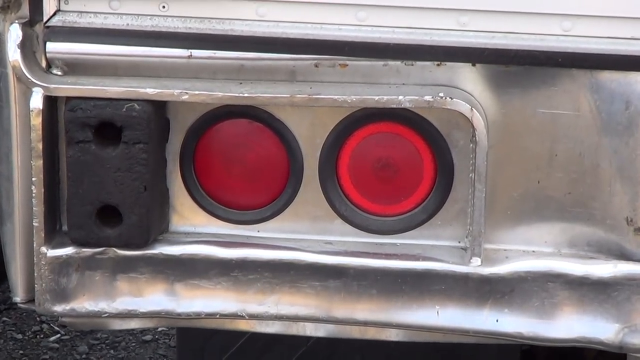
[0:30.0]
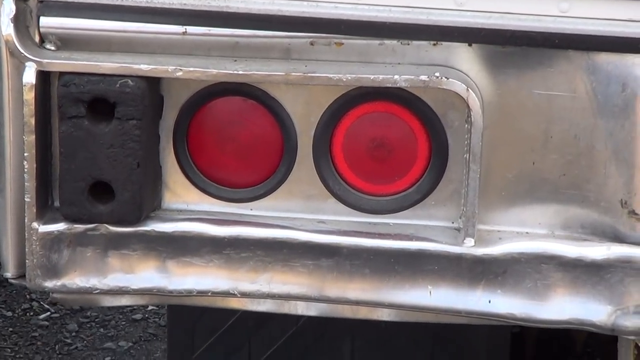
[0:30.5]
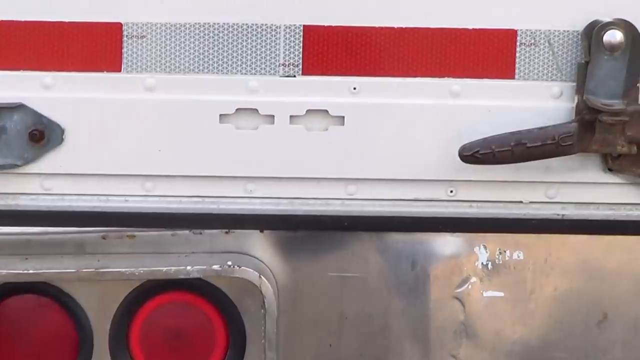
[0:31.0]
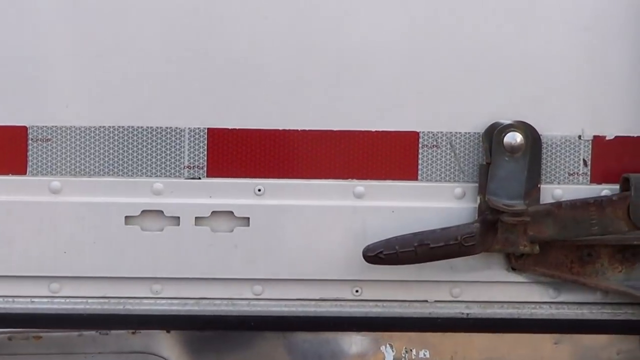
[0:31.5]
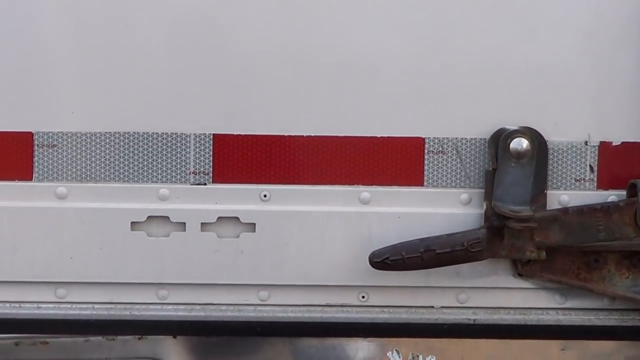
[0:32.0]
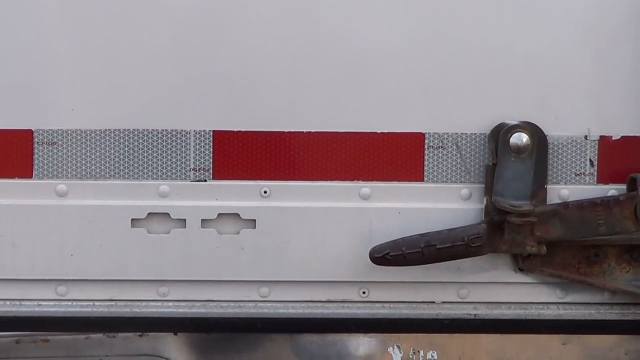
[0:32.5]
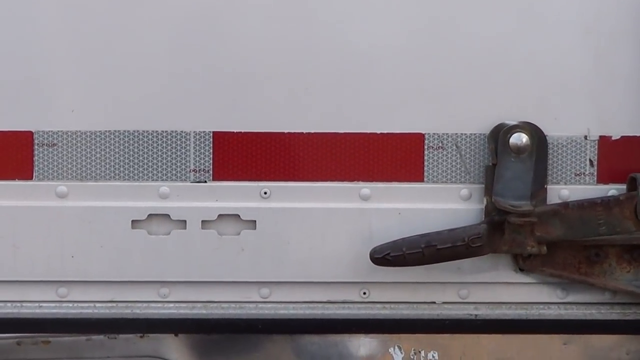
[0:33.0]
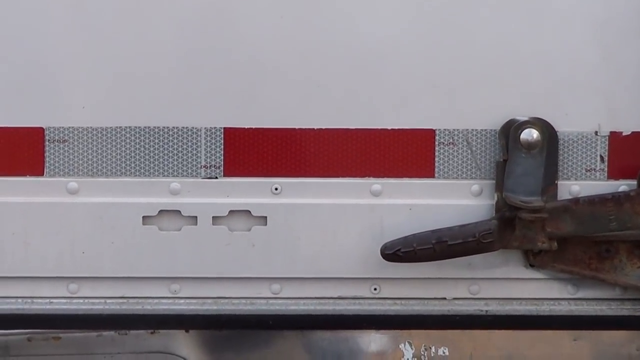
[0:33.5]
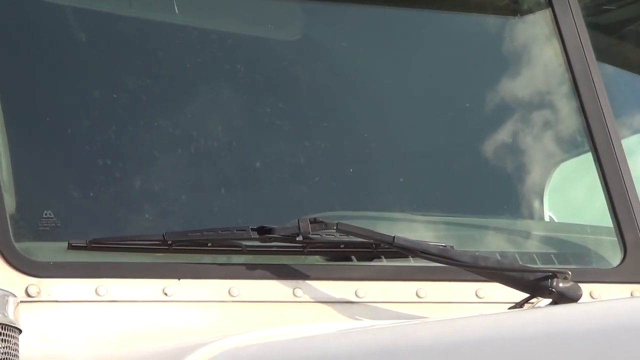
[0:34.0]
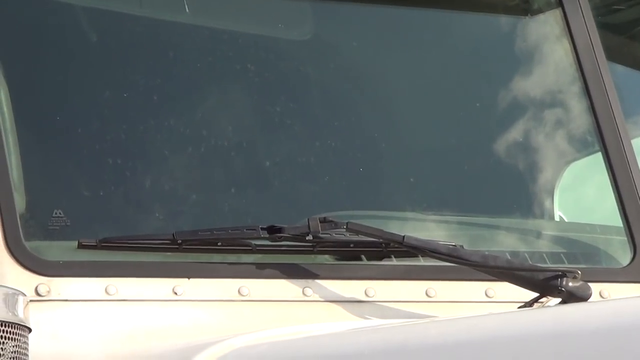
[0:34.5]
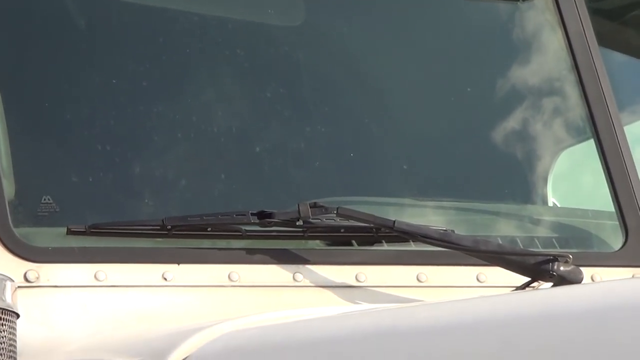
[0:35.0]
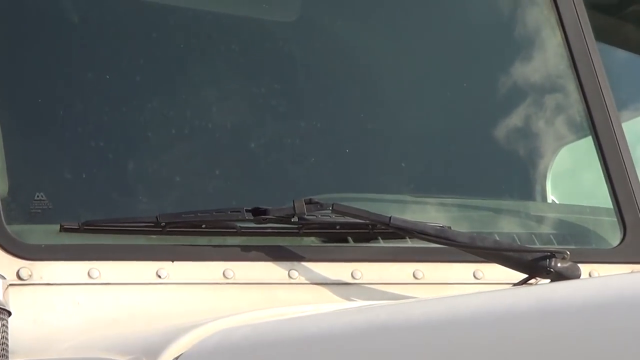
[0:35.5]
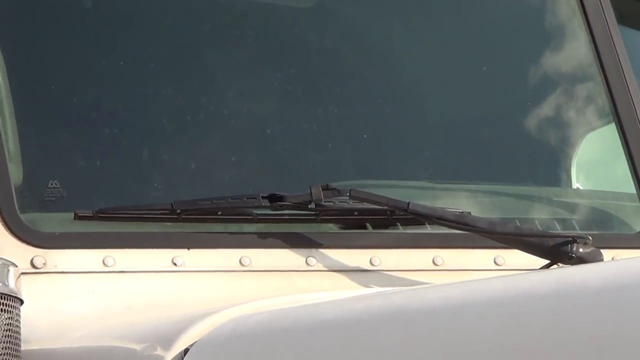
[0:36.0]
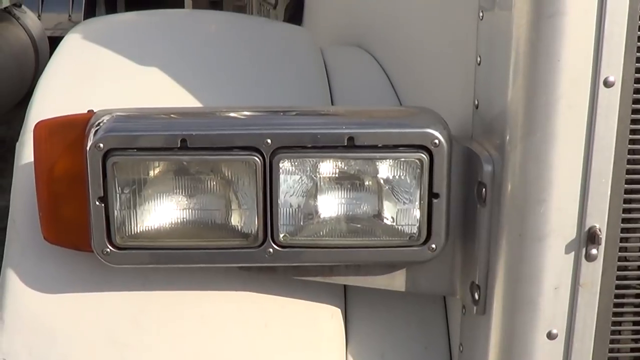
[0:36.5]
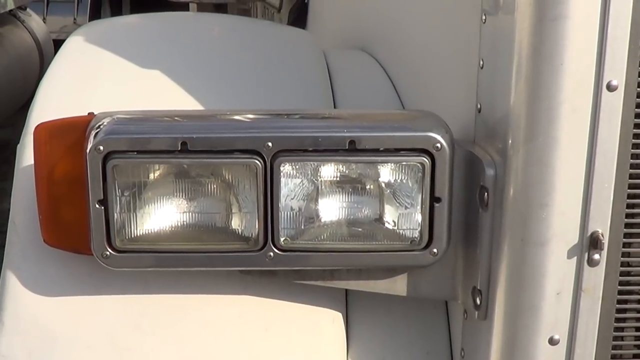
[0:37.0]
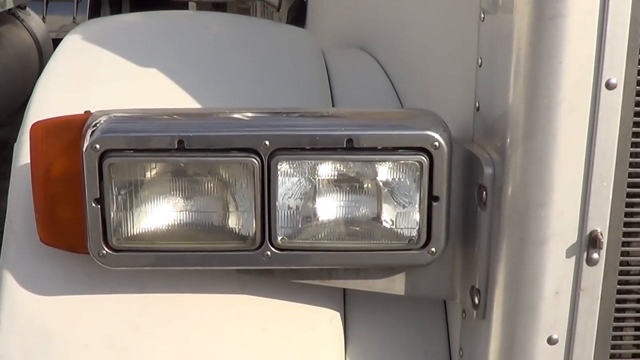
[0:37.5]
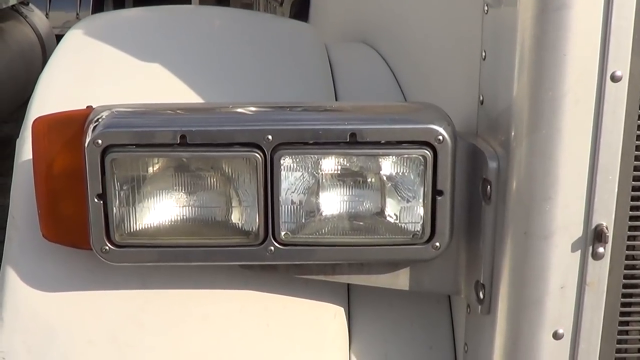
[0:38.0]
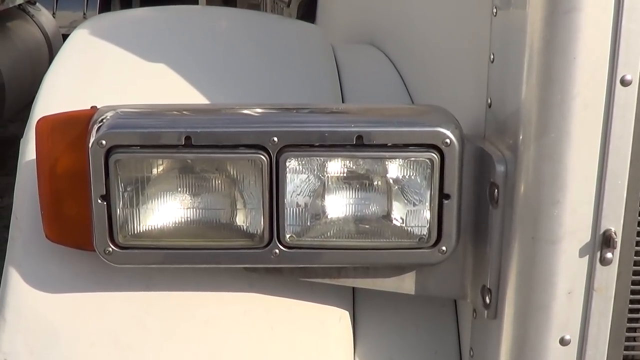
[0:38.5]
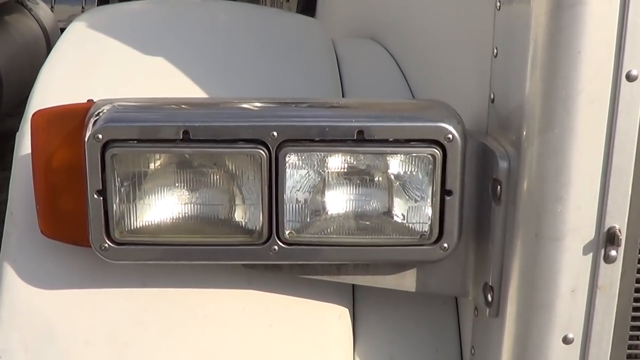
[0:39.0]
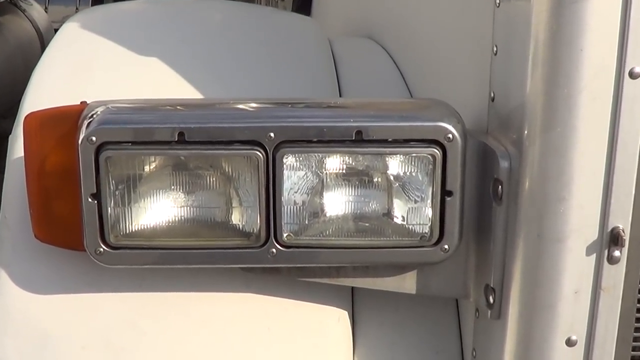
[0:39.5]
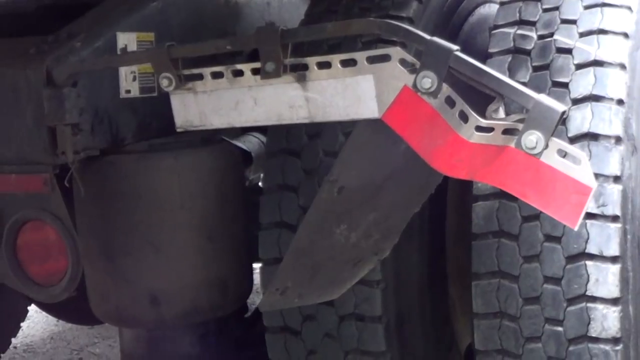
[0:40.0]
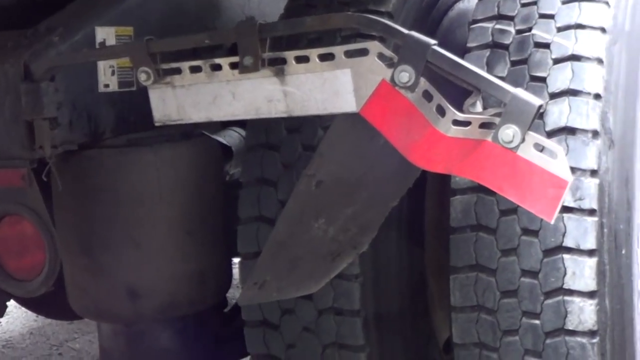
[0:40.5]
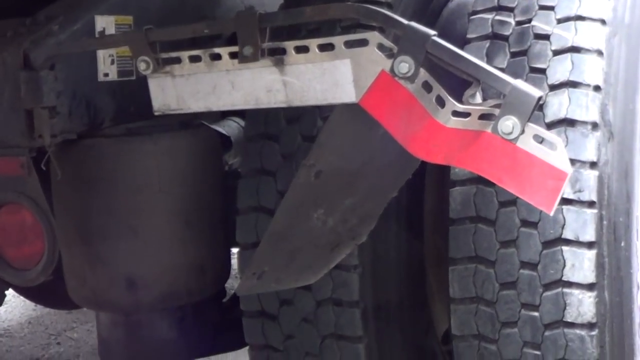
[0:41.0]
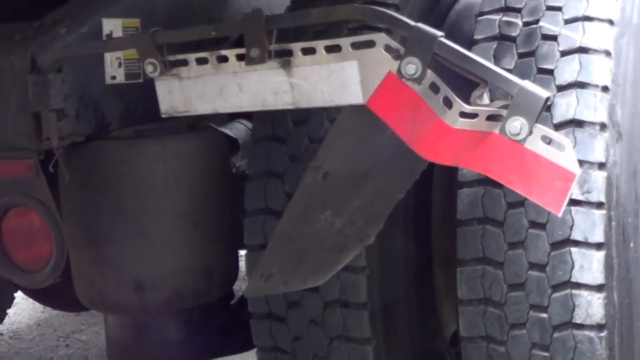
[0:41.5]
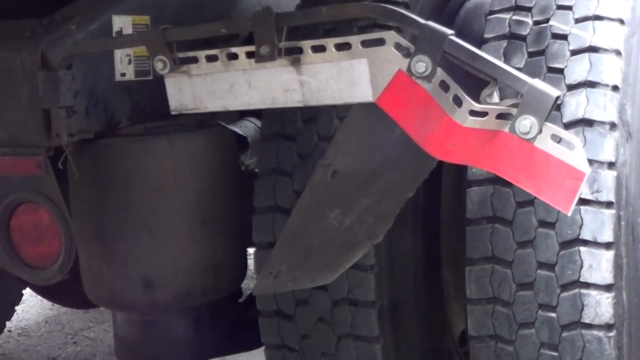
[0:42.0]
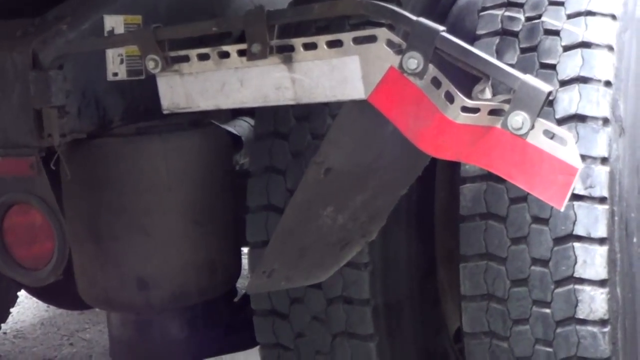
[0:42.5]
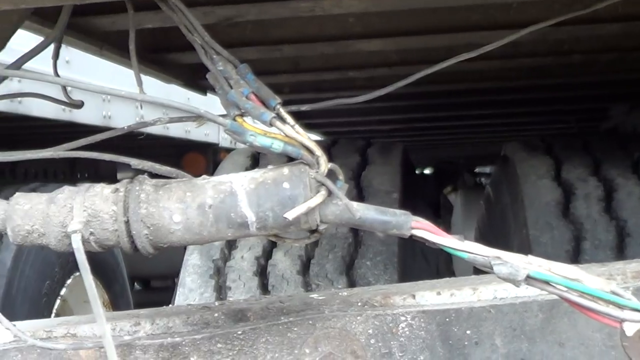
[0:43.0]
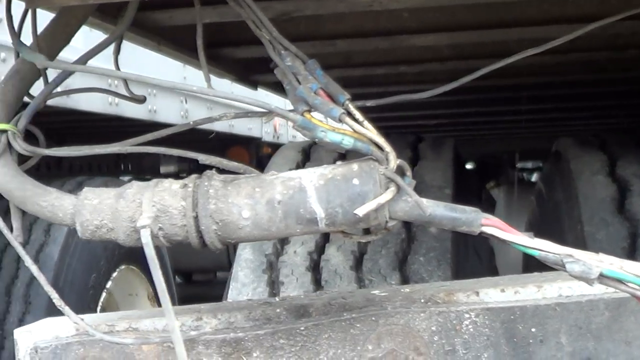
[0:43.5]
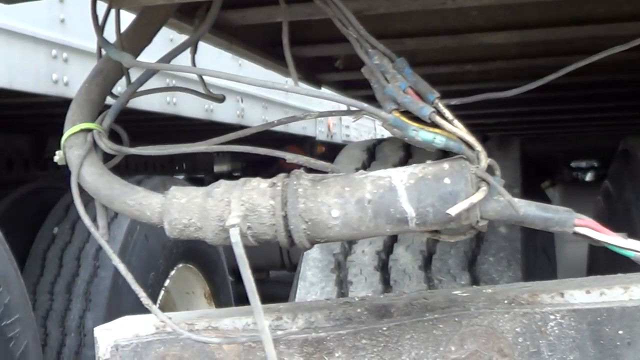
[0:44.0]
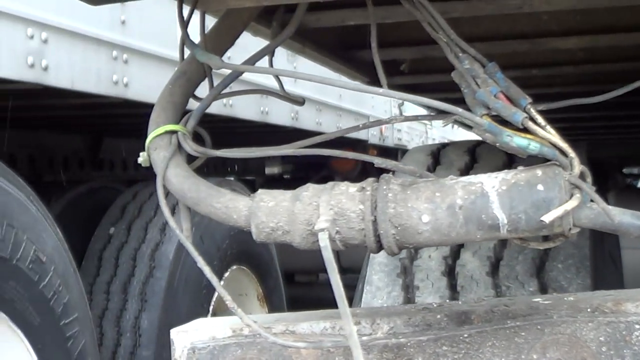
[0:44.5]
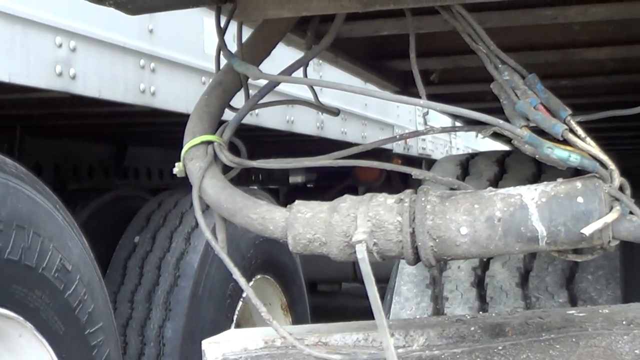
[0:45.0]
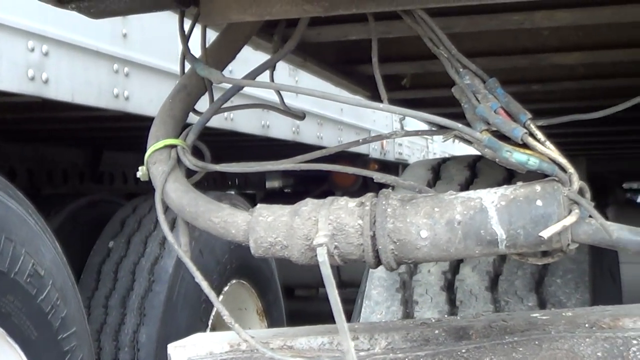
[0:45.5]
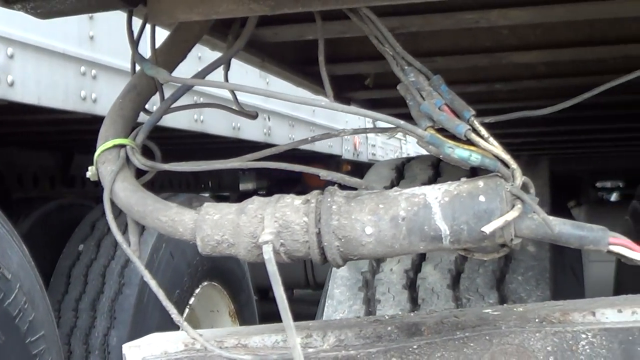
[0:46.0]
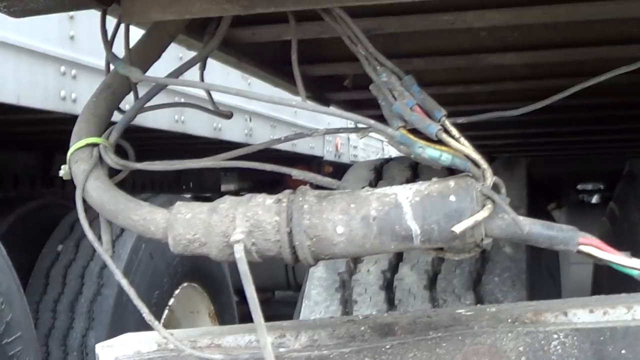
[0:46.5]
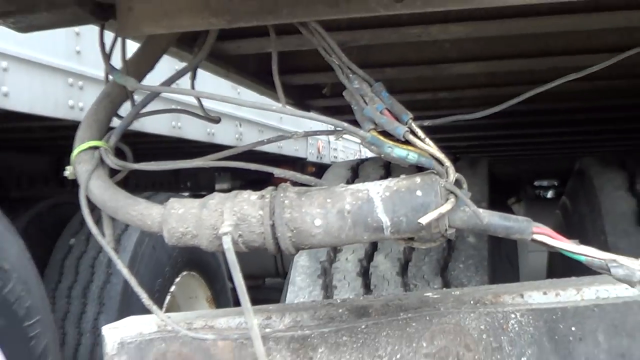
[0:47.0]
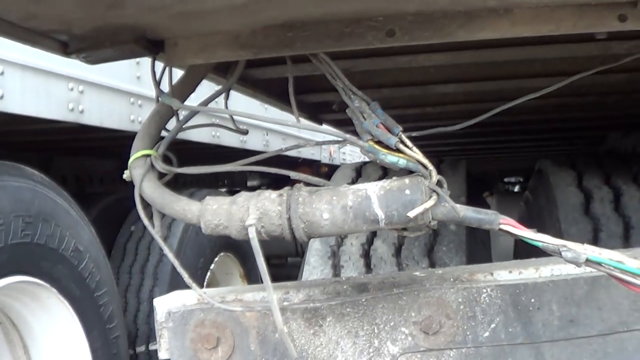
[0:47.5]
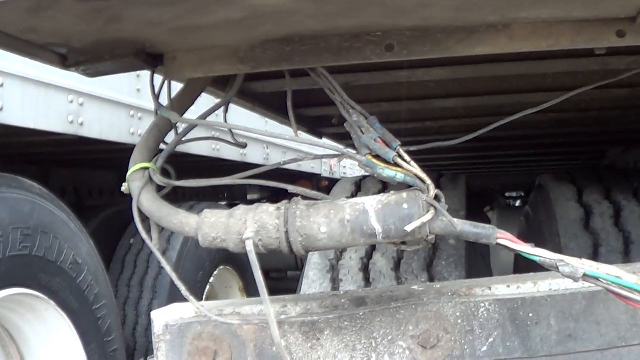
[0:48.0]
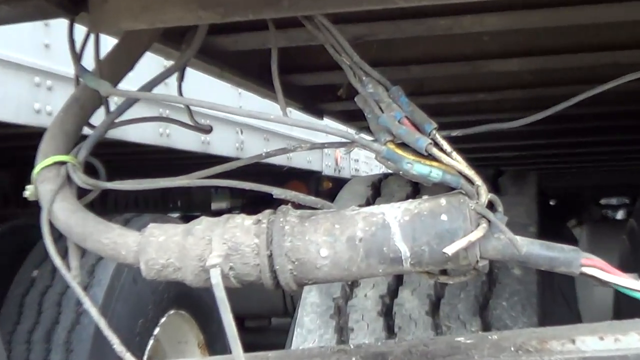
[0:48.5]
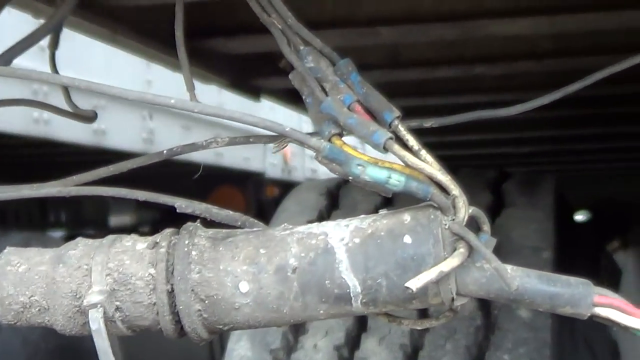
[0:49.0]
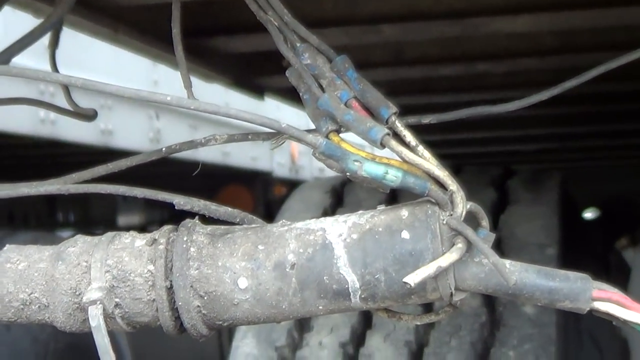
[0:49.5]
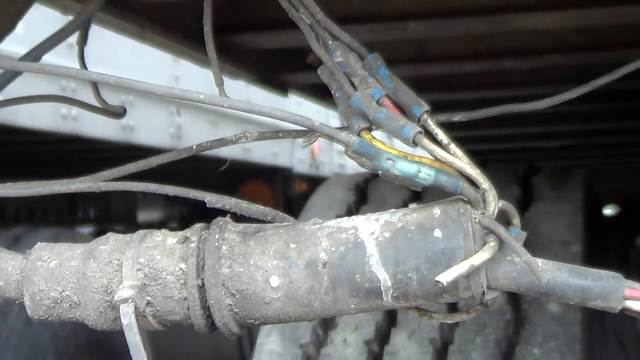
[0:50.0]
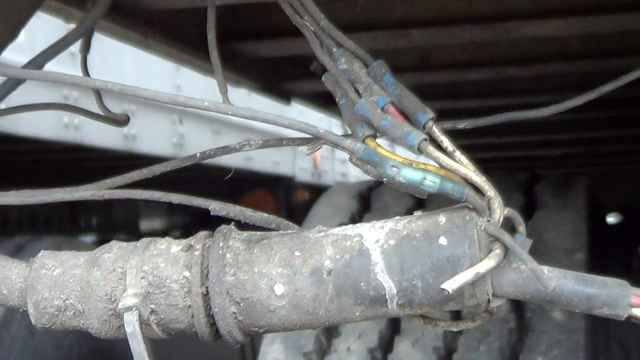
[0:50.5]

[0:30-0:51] The silver bumper has two round red lights, each with a black plastic circle around it; they look like tail lights. To the left of the two lights is a black piece of what may be rubber with two holes in it. Along the bottom of the bumper there are several dents. The camera pans to the right to what looks like a white metal railing with evenly spaced rivets. Then the windshield of the van appears, with the windshield wiper and a big, flat, rectangular windshield; the body of the van is white. Next is the headlight, which looks to be mounted just above the wheel well, with two bright white rectangular headlights inside it and an orange signal light on the side. Finally, more tire treads and part of the underside of the vehicle are shown.